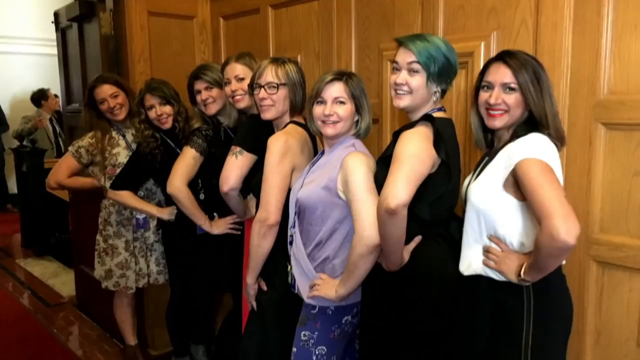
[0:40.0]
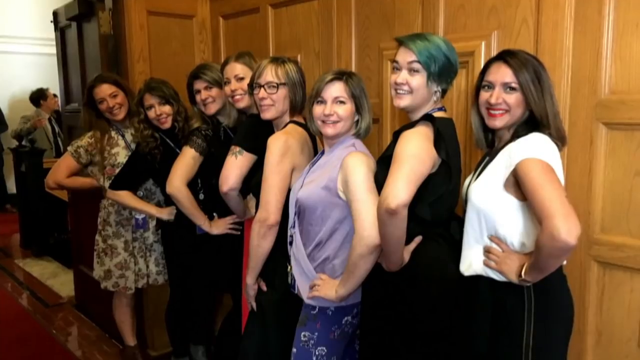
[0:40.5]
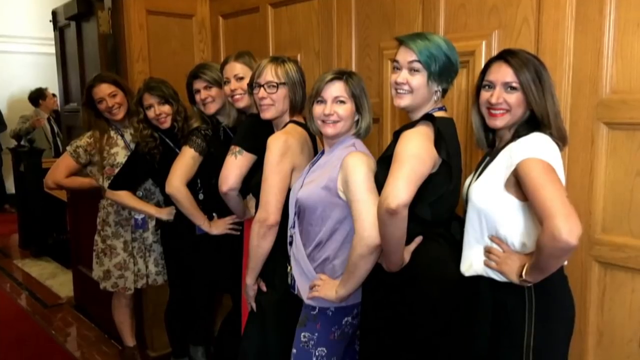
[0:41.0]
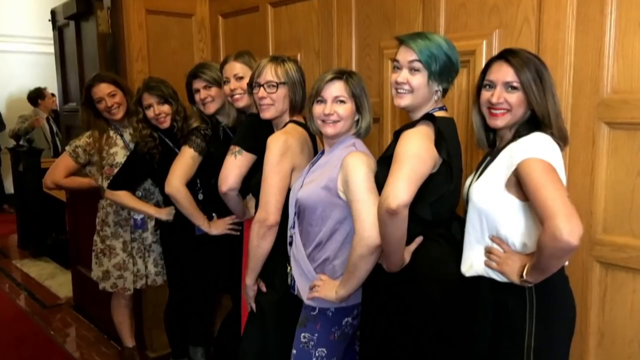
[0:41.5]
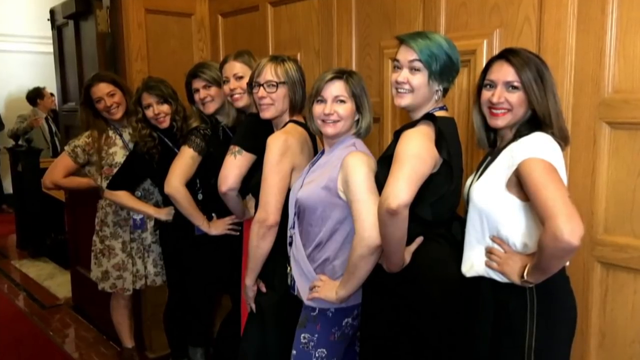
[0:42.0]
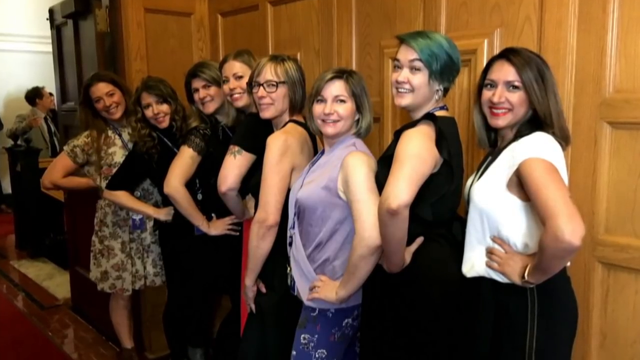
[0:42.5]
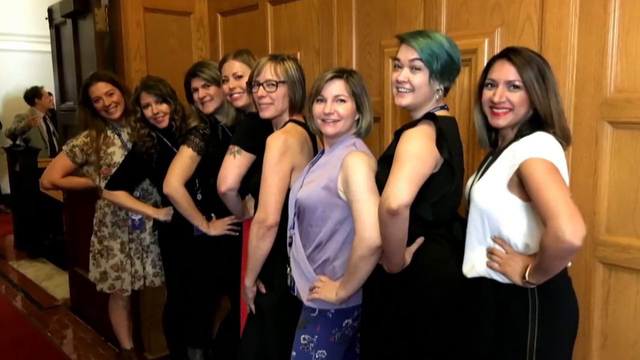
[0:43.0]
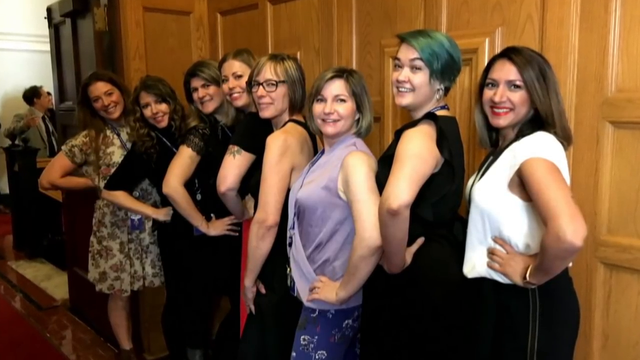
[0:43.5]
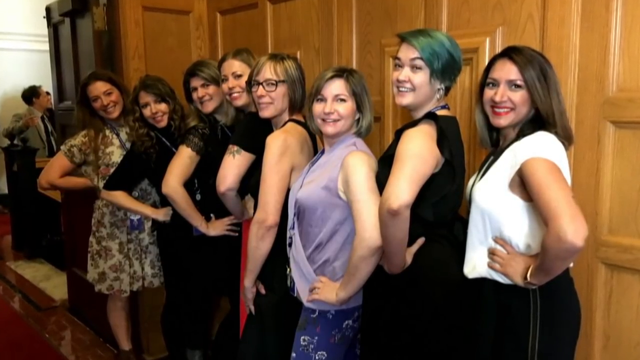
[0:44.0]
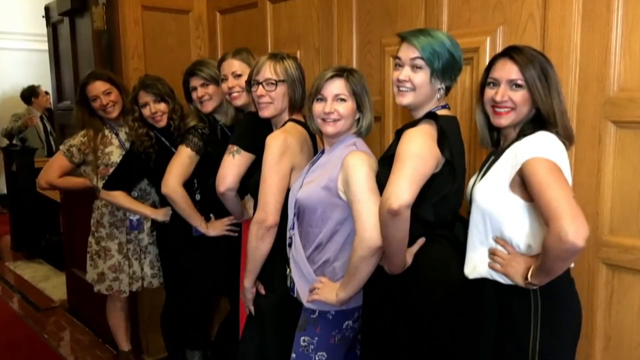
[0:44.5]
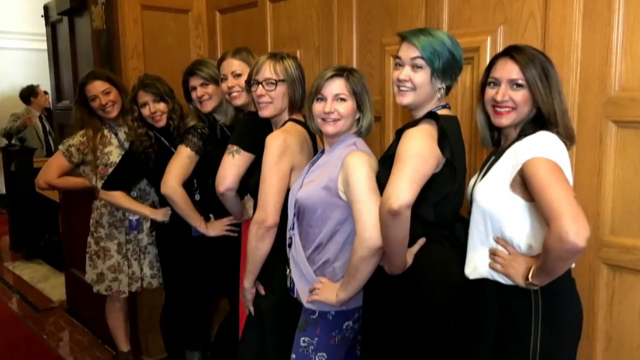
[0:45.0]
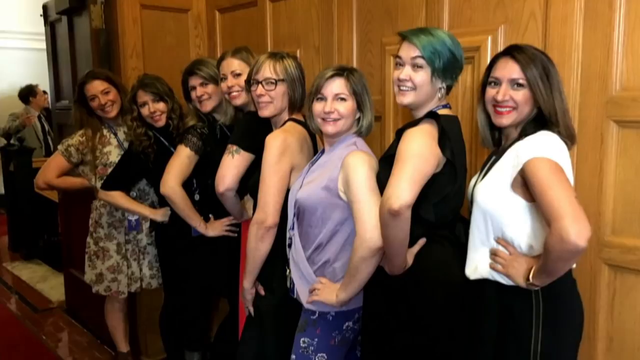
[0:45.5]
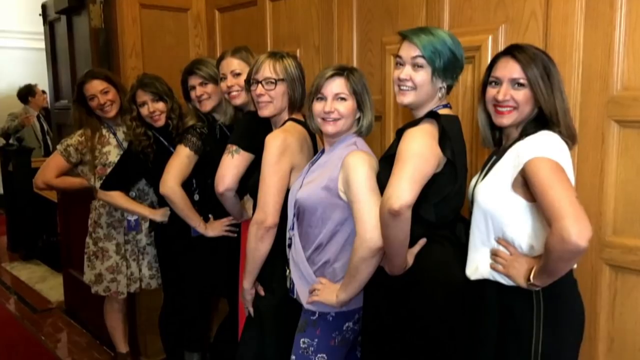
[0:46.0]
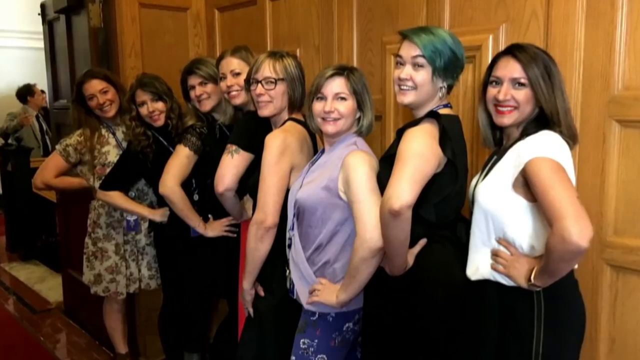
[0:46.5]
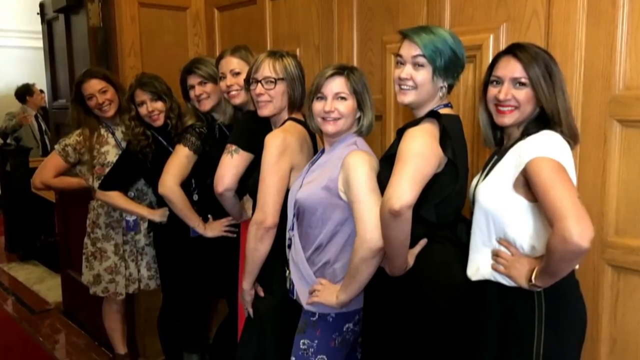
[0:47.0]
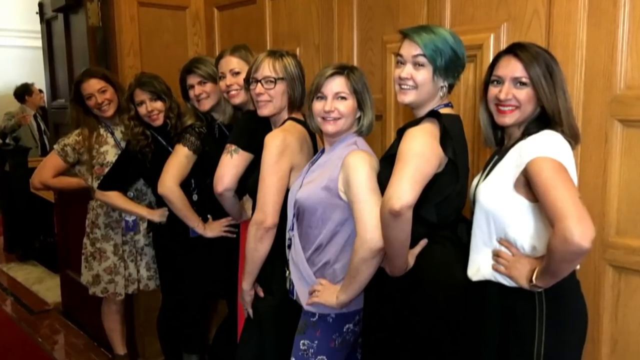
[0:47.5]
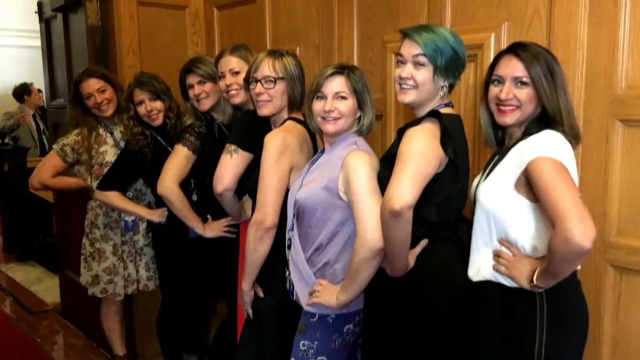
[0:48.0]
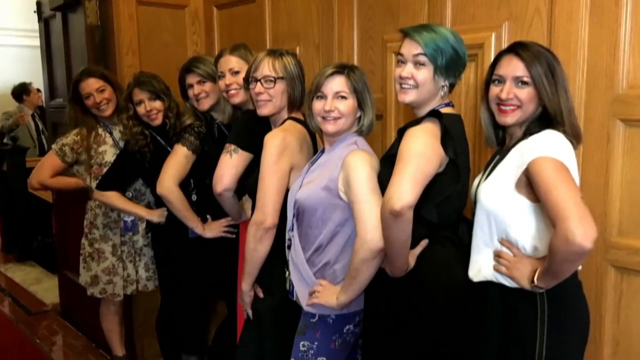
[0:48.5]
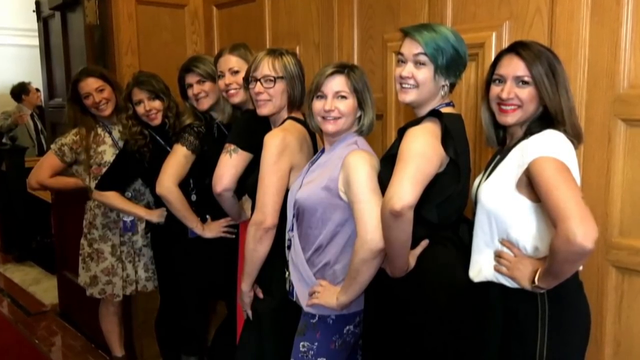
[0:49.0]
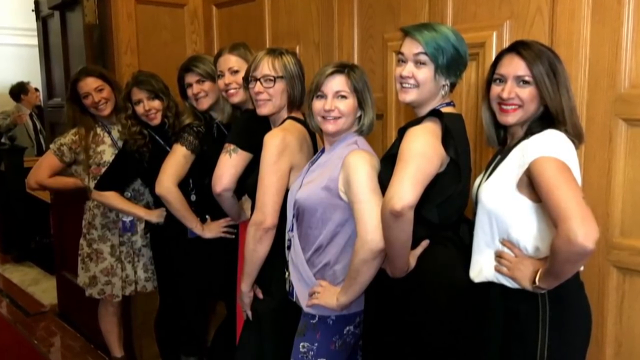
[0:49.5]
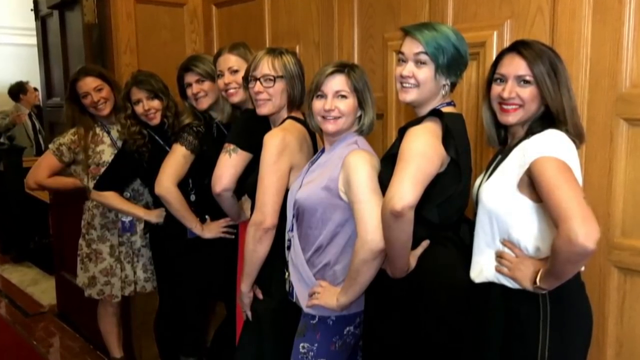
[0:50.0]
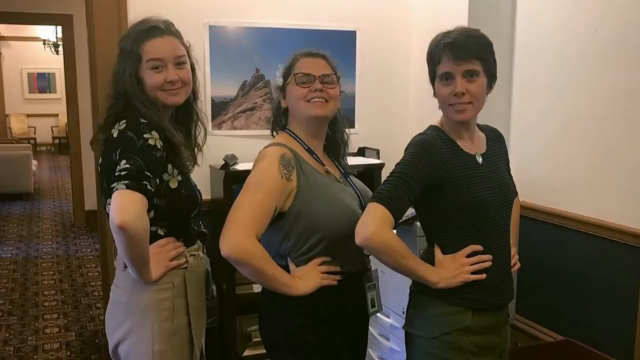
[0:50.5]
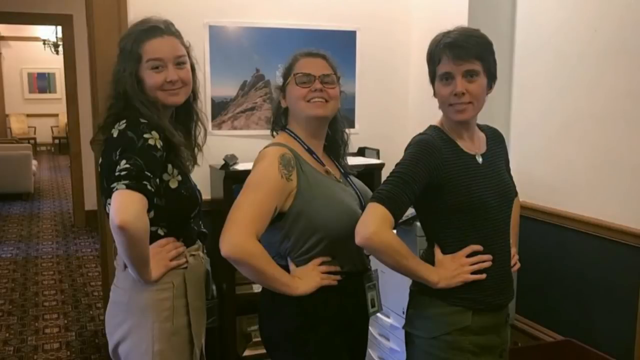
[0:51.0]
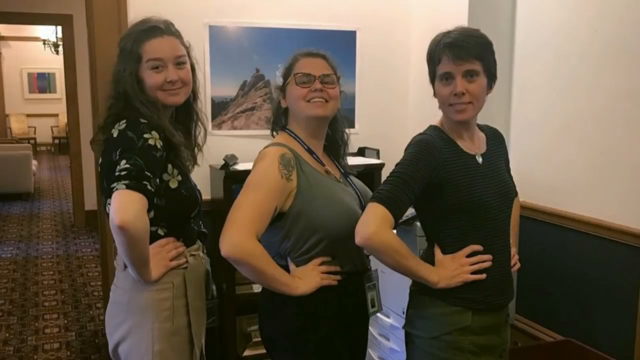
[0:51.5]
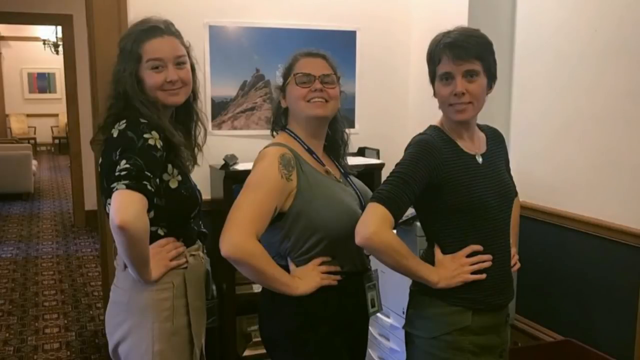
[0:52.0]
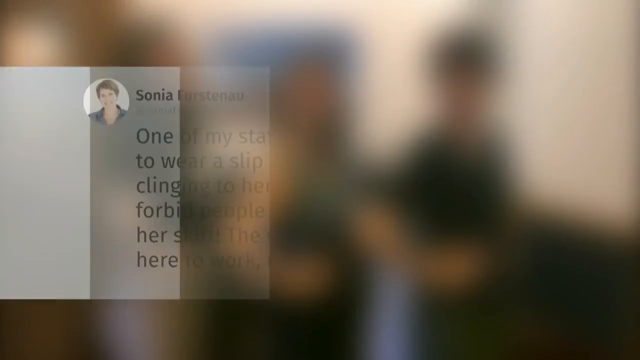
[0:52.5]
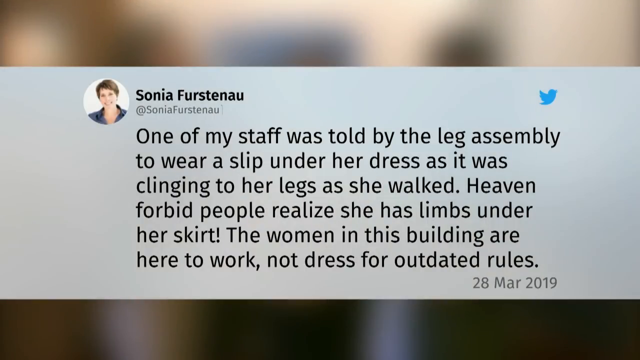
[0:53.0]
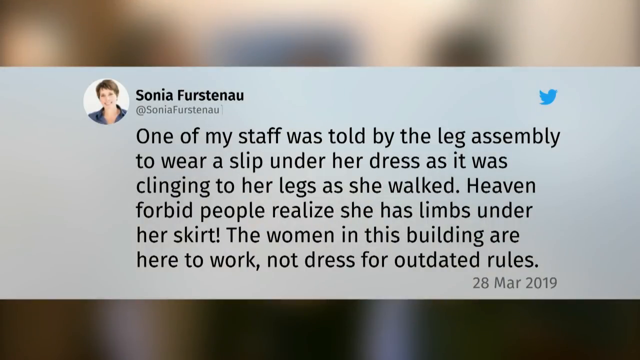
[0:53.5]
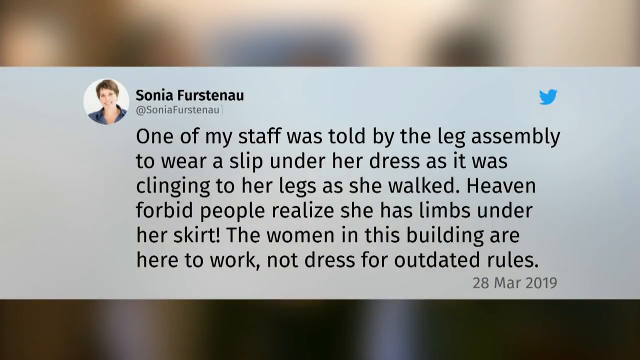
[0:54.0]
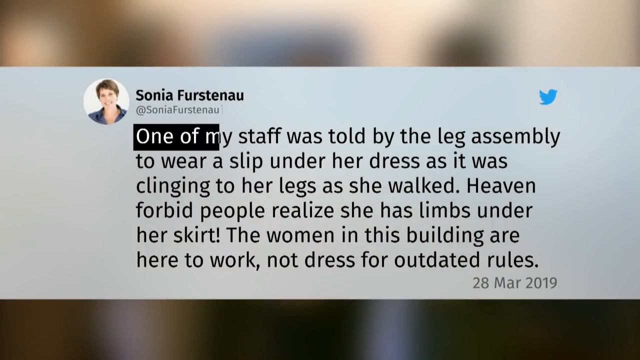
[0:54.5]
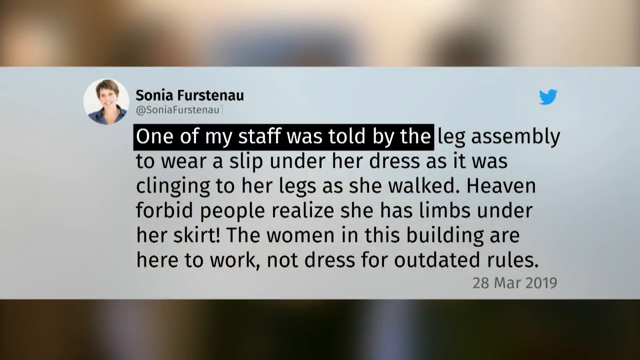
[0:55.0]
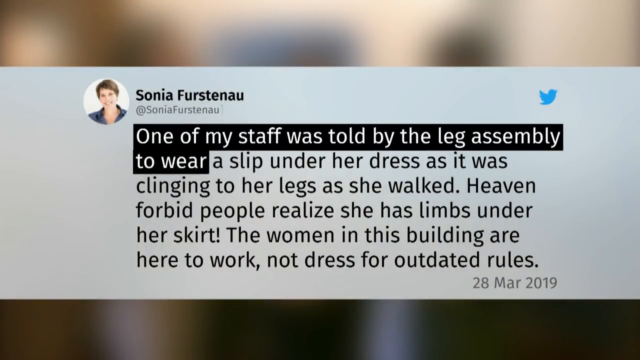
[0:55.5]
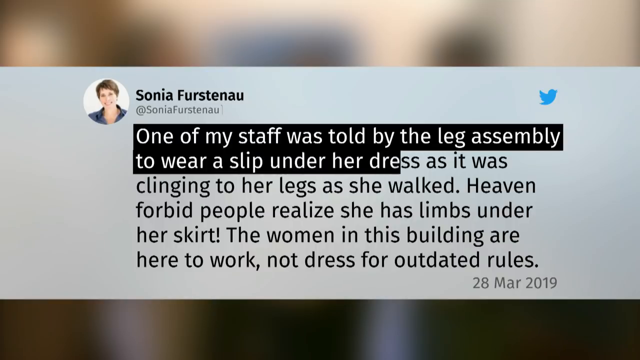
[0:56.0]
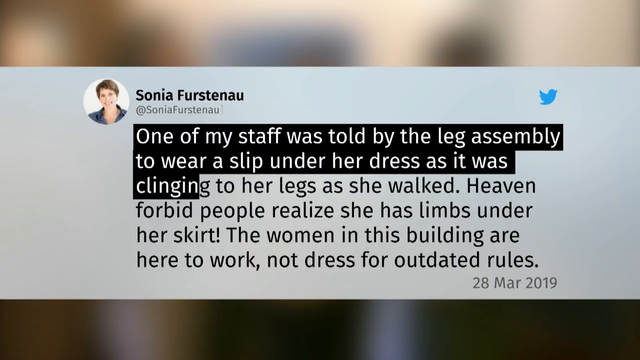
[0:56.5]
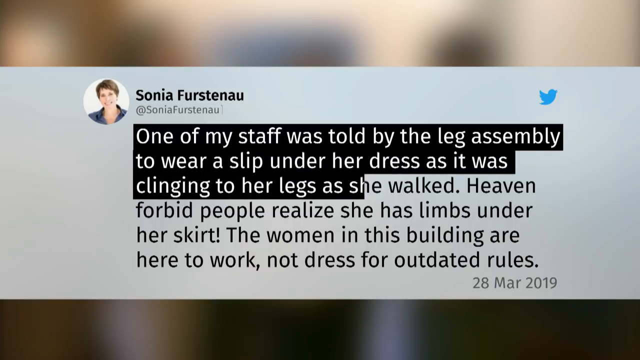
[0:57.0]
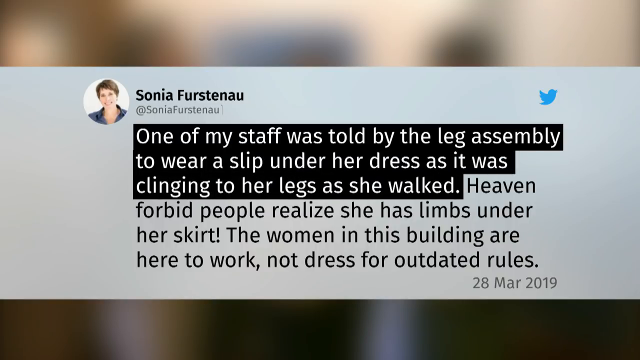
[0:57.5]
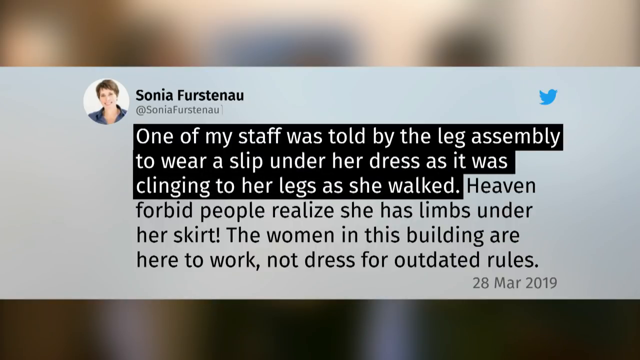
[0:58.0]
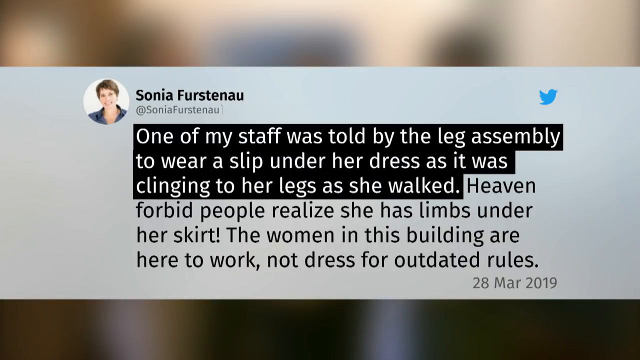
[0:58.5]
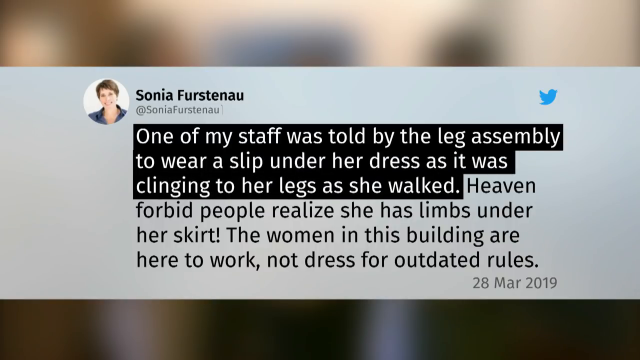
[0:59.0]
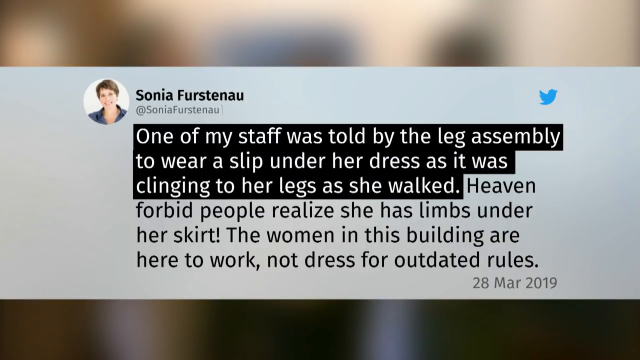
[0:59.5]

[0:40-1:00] A picture shows eight women posing with their arms and hands on their hips, photographed from their sides, against a wooden background. From left to right, the first wears a white tank top, the second a black tank top, the third a purple tank top, the fourth a black tank top, the fifth, sixth and seventh all-black outfits, and the eighth a flowery dress. The view zooms a bit into the picture, then another photo shows three women in the same pose. The video cuts to a tweet by Sonia Furstenau dated 28th March 2019 that reads: "One of my staff was told by the leg assembly to wear a slip under her dress as it was clinging to her legs as she walked. Heaven forbid people realize she has limbs under her skirt. The women in this building are here to work, not to dress for outdated rules."